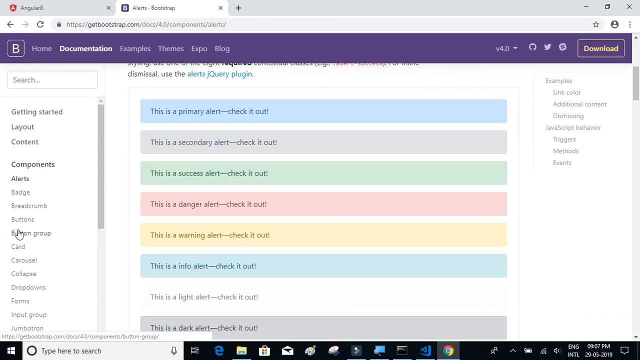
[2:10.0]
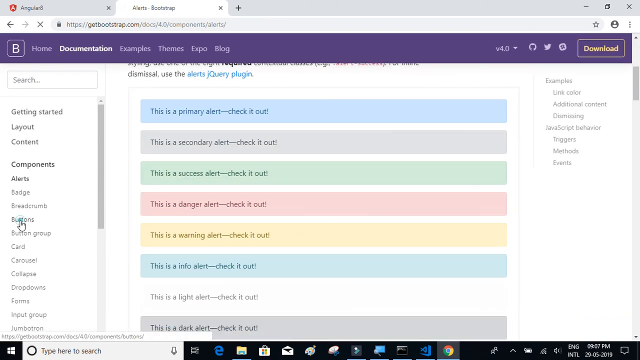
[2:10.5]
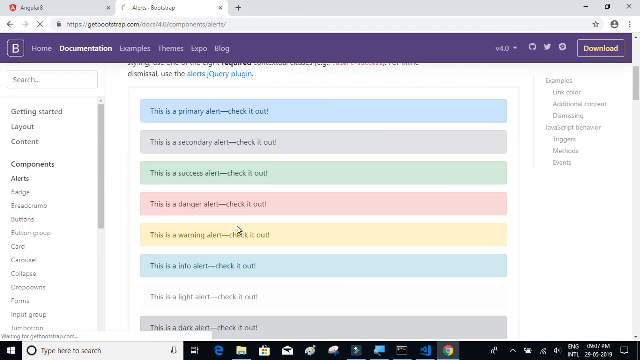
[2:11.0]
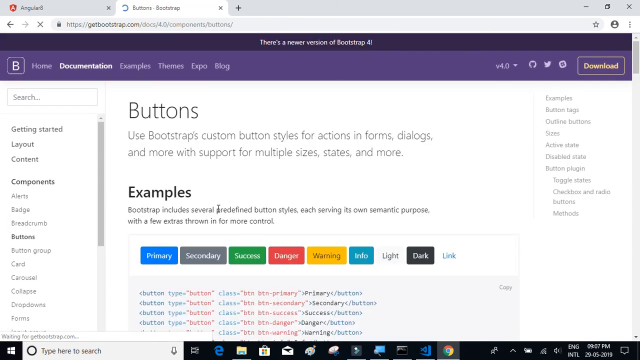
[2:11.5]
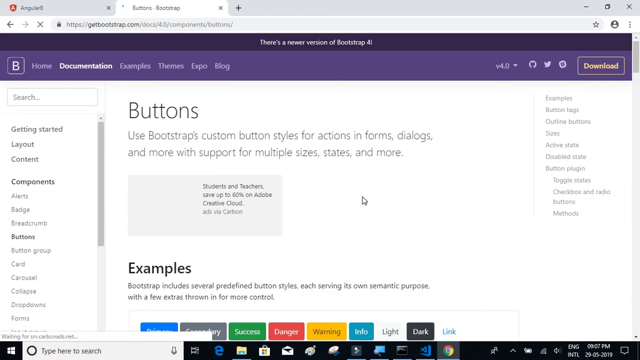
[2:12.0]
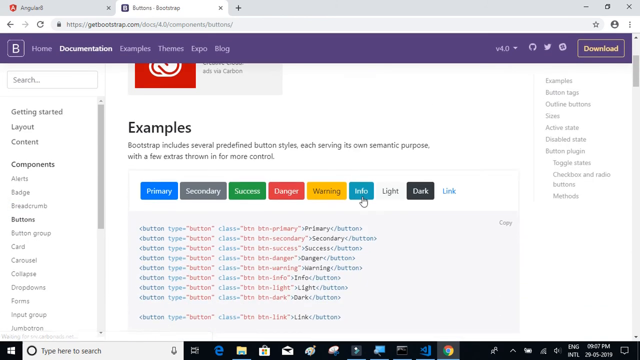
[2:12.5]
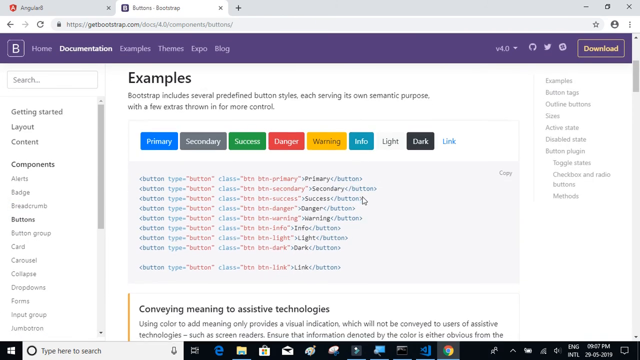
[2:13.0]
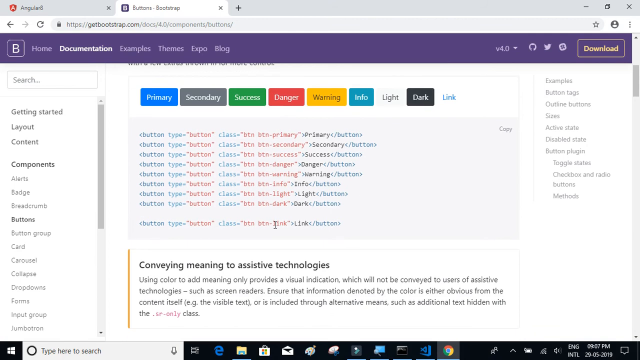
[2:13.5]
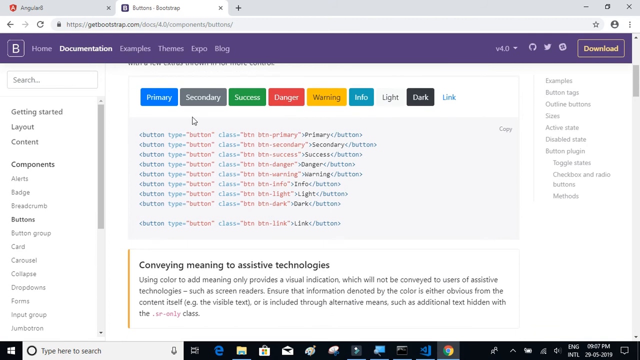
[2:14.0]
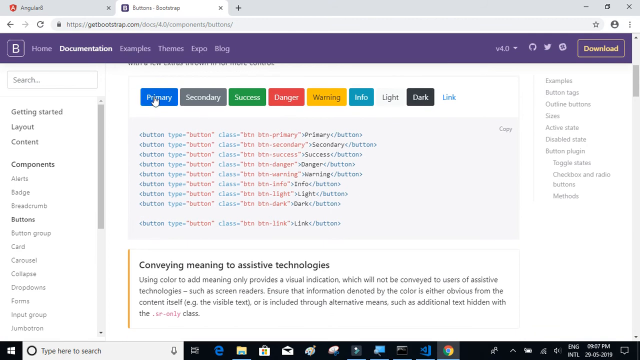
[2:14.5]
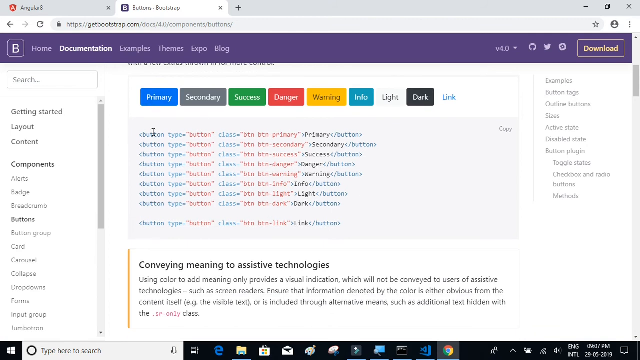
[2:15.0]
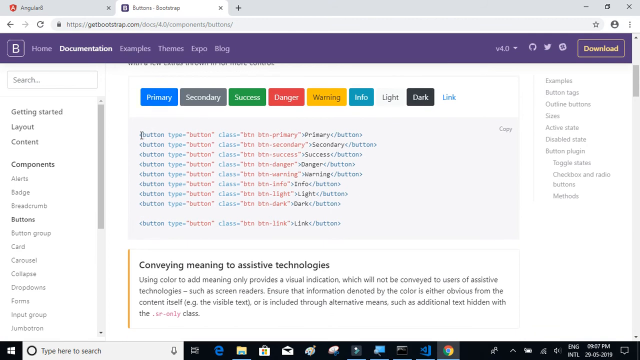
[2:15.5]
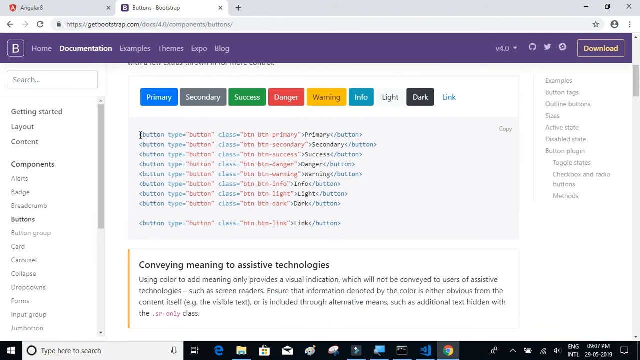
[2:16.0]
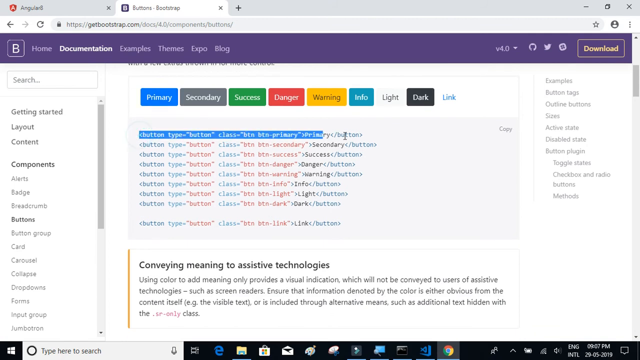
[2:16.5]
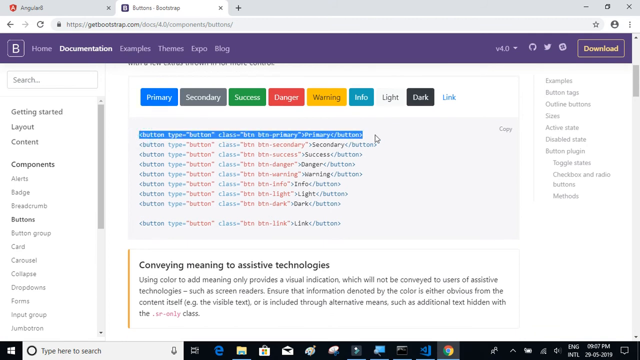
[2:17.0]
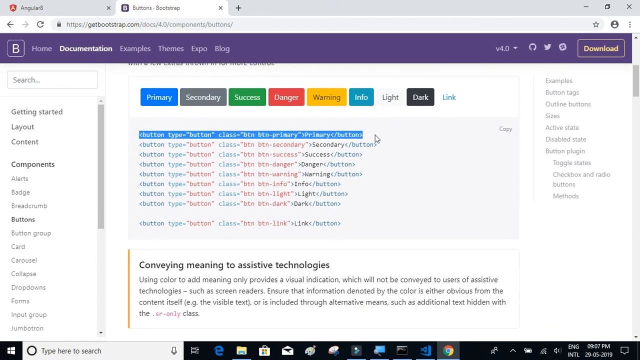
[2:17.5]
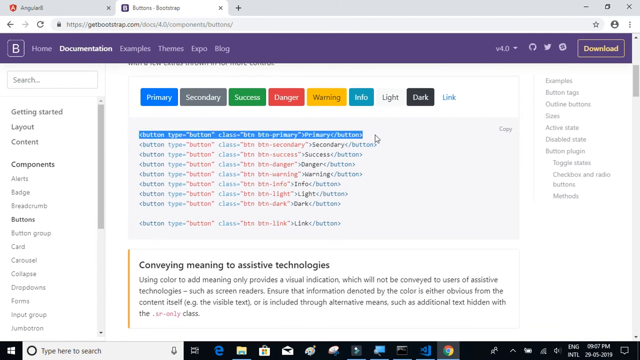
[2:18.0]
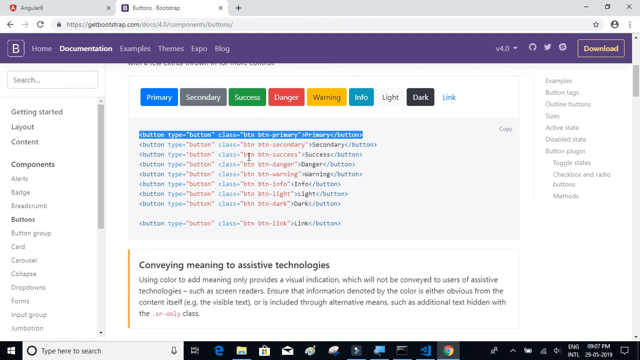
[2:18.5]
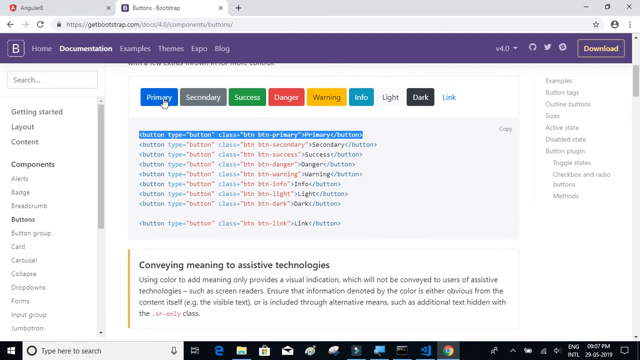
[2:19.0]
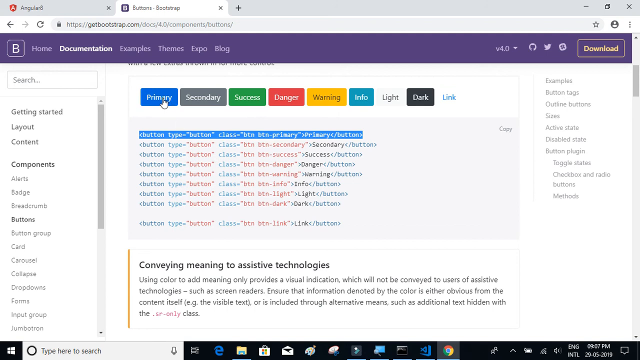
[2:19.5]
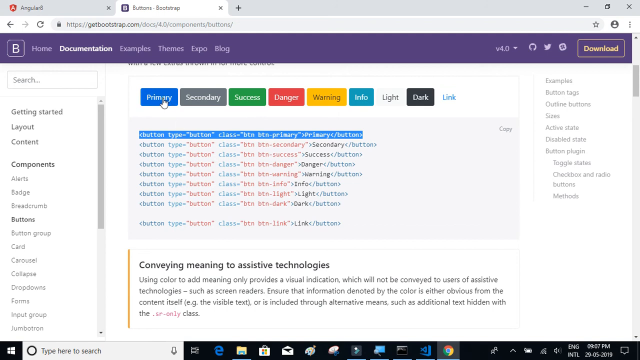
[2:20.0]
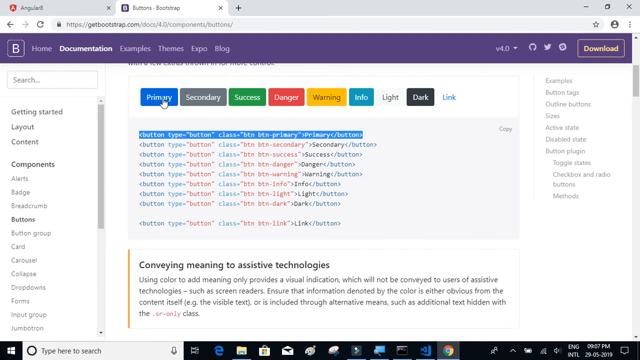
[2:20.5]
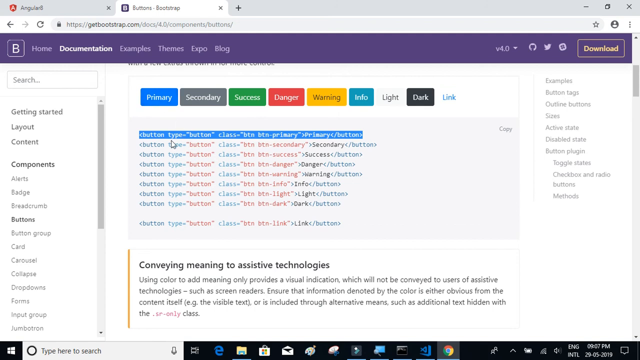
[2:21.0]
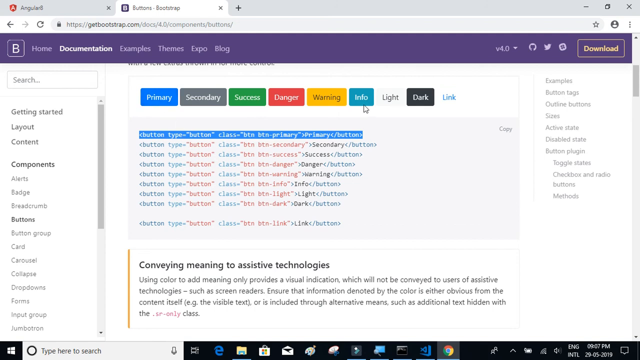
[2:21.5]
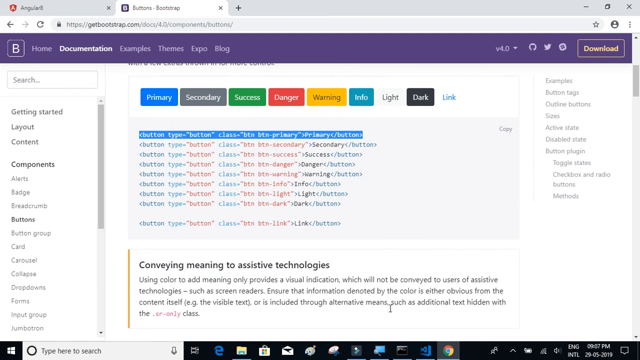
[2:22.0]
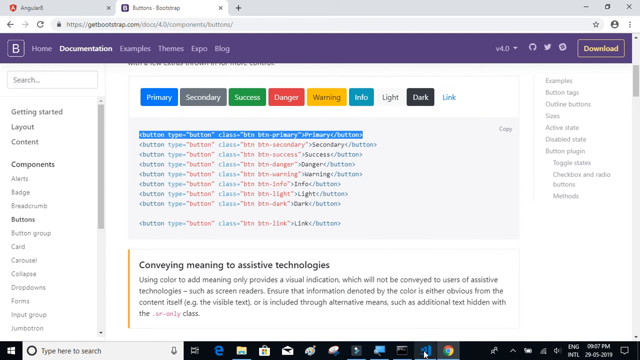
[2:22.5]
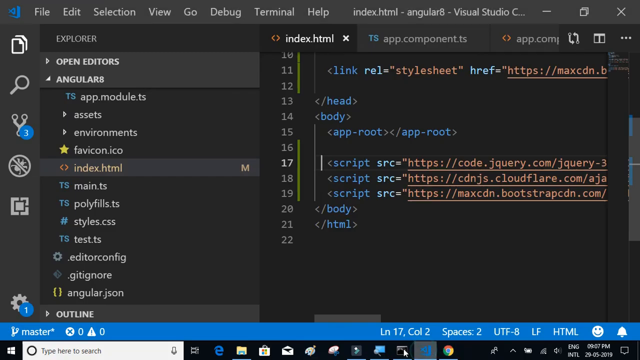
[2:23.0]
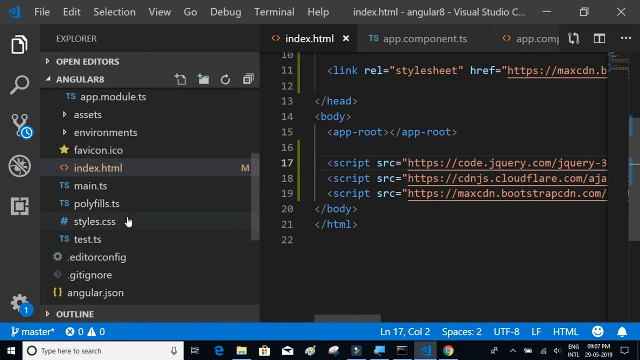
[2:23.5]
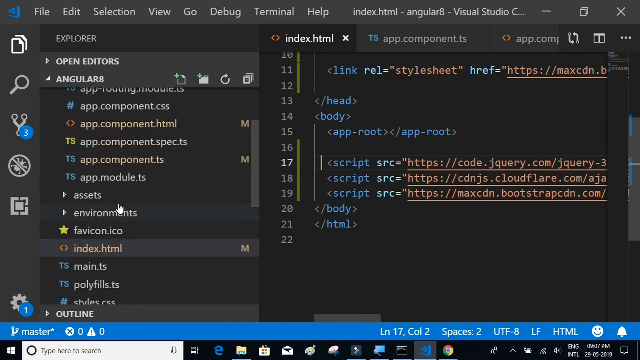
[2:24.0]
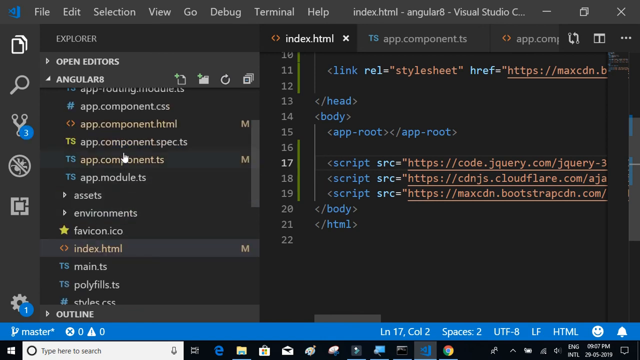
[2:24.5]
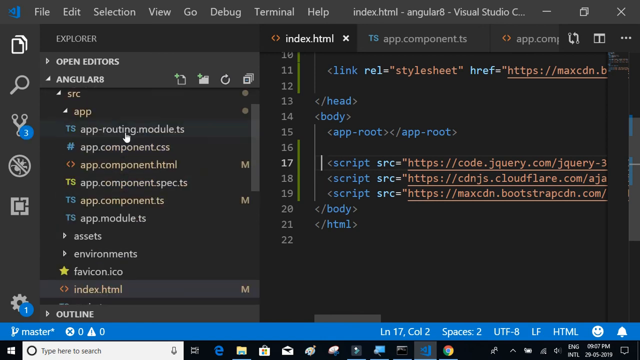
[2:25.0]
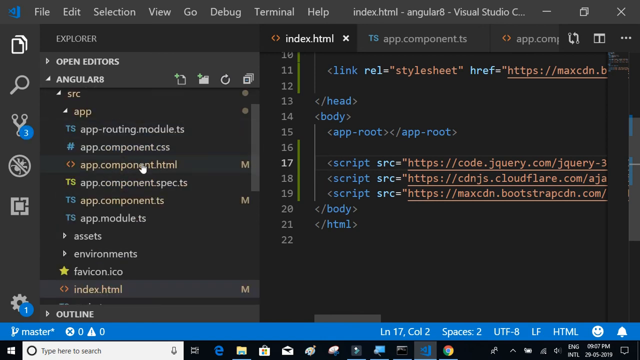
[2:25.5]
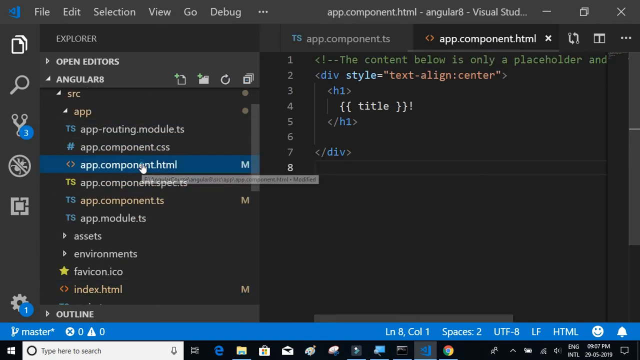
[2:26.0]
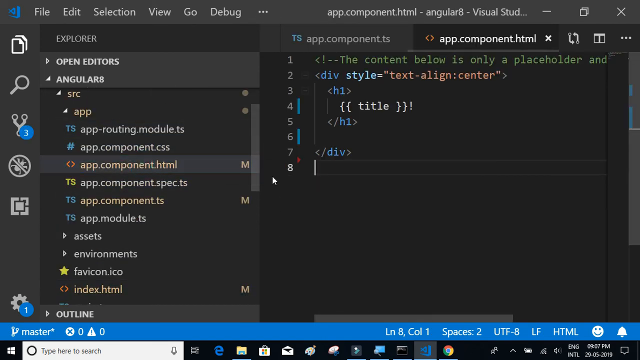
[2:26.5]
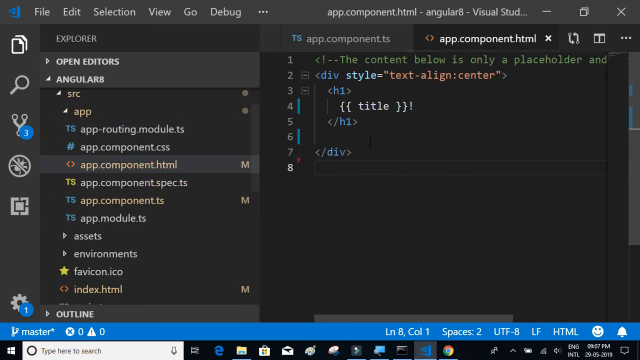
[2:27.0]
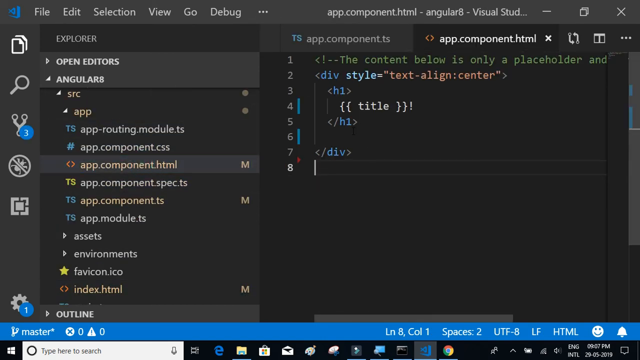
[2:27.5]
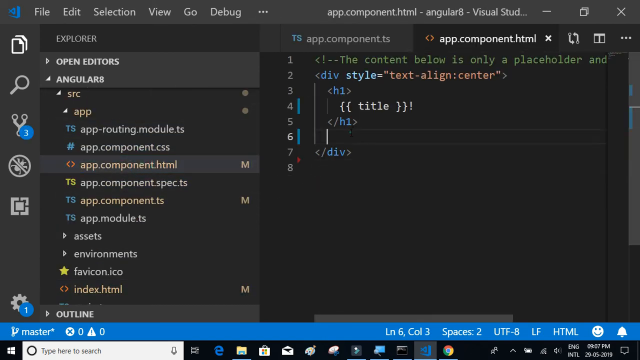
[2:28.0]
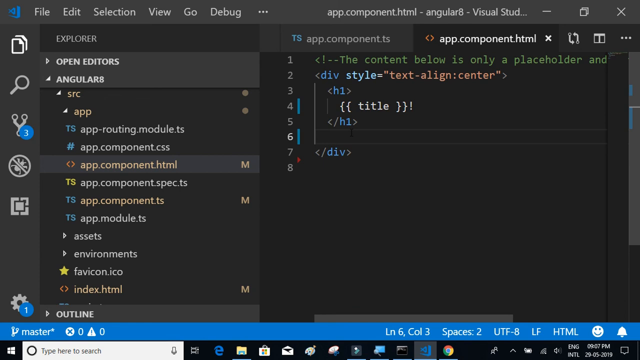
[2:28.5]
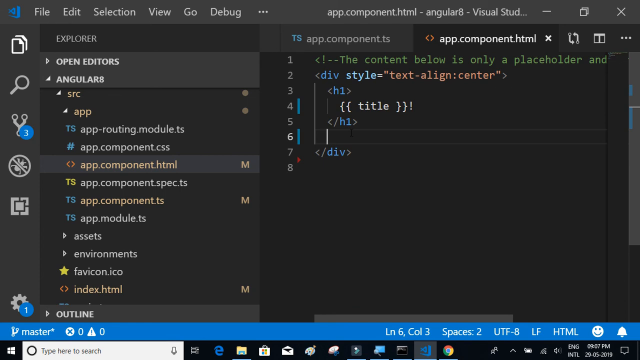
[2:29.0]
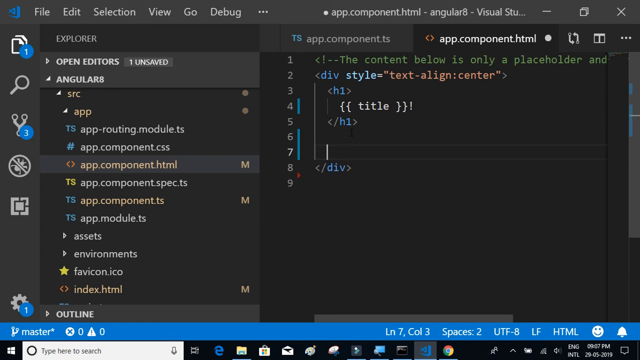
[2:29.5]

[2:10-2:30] A computer page is open on a monitor, and the user is apparently learning or using Bootstrap. The page says "buttons - bootstrap"; the user has highlighted an area and clicks on the word "primary". They then use a button towards the bottom and go to a JavaScript area to do some computer programming. Two tabs are open, one saying "angulars" and the other "alerts - bootstraps". On the open page there is a blue rectangle that says "this is a primarily alert check it out". Under it a long gray rectangle says "this is a secondary alert check it out". Underneath is a green rectangle saying "this is a success alert check it out", then a red-lined rectangle saying "this is a danger alert check it out". A yellow one below says "this is a warning alert check it out", a teal one says "this is an info alert check it out", and a white one below says "this is a light alert check it out".